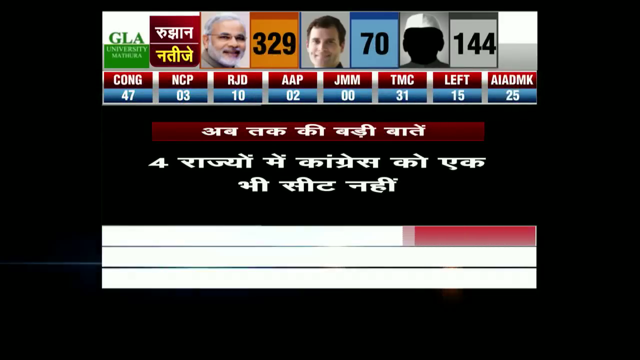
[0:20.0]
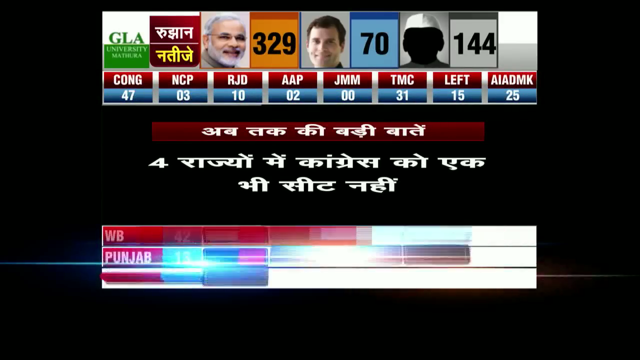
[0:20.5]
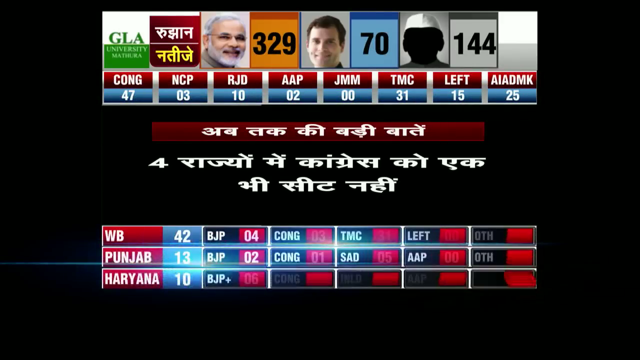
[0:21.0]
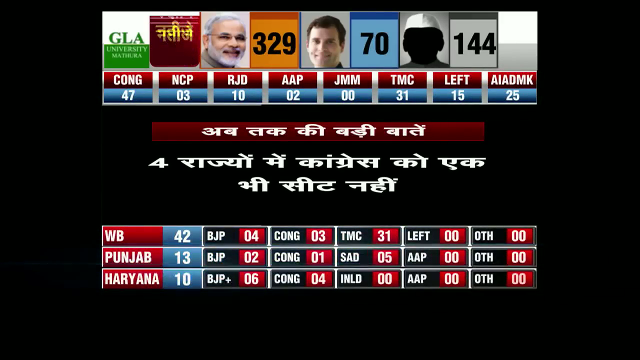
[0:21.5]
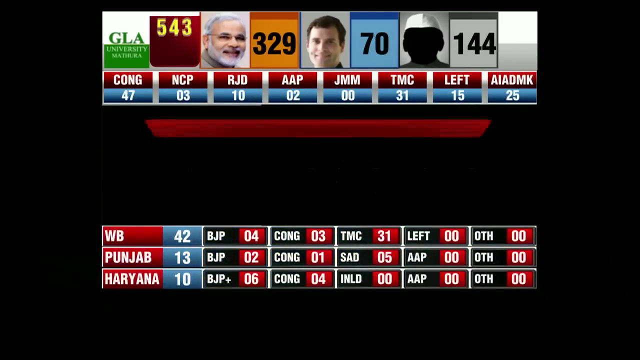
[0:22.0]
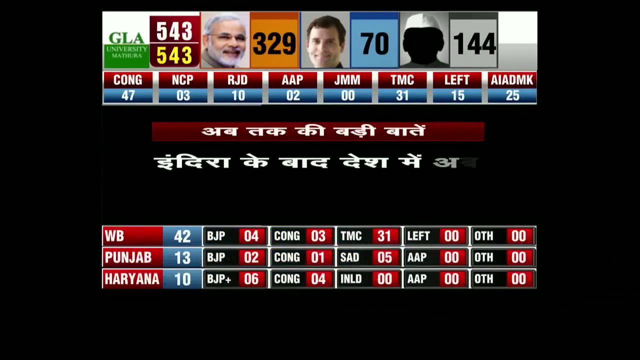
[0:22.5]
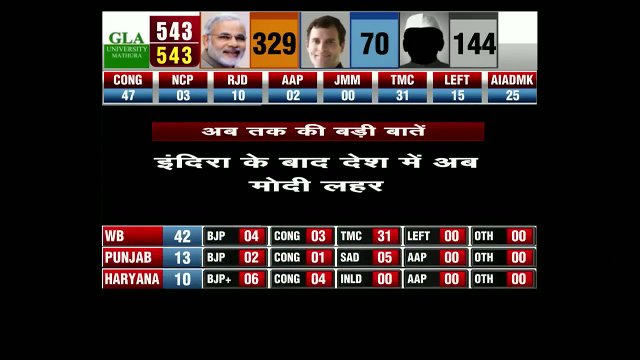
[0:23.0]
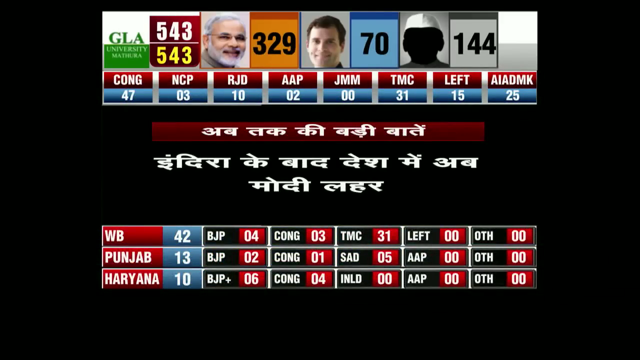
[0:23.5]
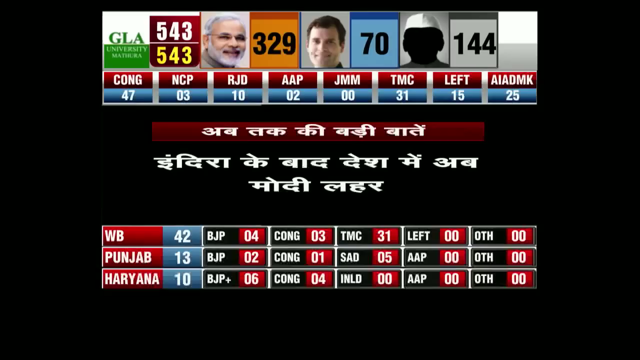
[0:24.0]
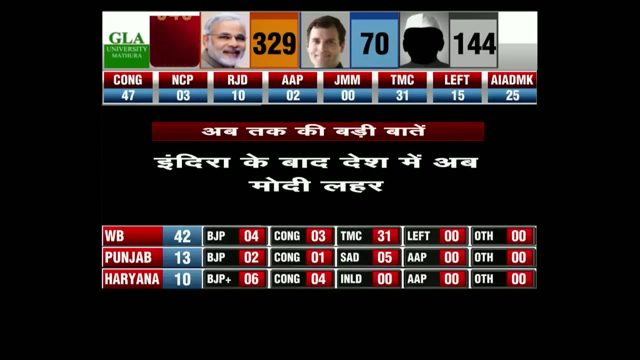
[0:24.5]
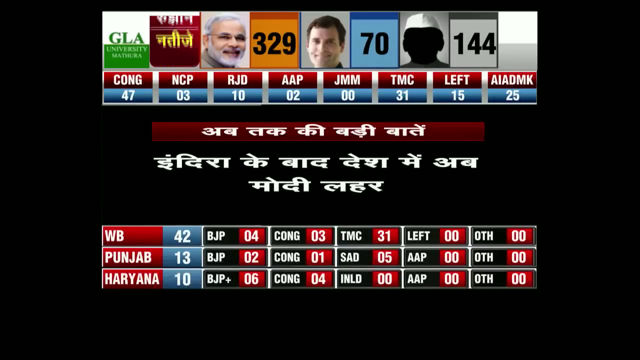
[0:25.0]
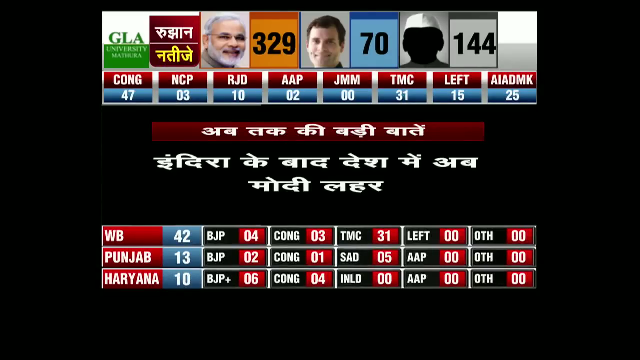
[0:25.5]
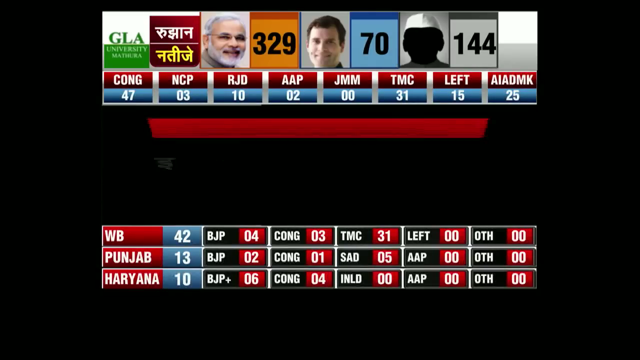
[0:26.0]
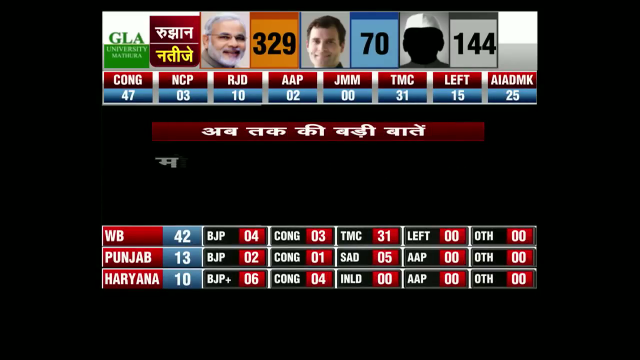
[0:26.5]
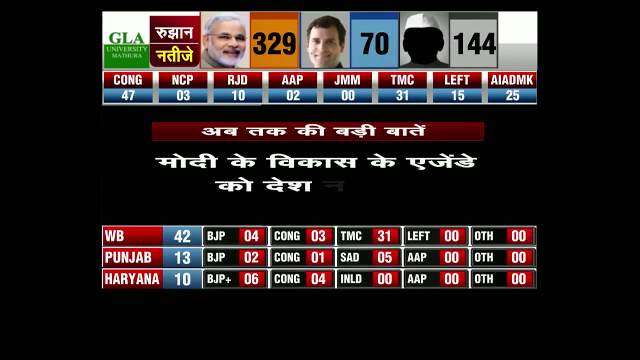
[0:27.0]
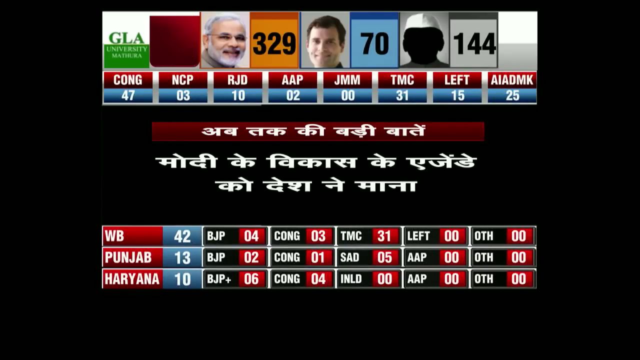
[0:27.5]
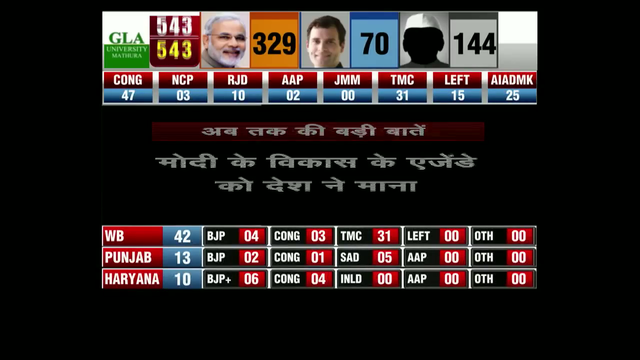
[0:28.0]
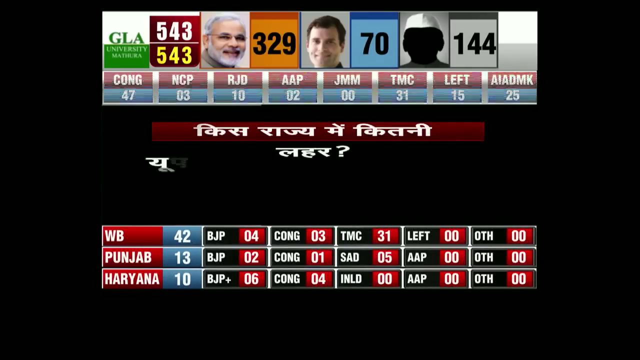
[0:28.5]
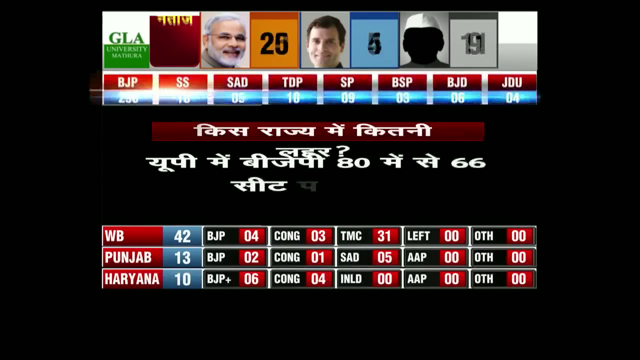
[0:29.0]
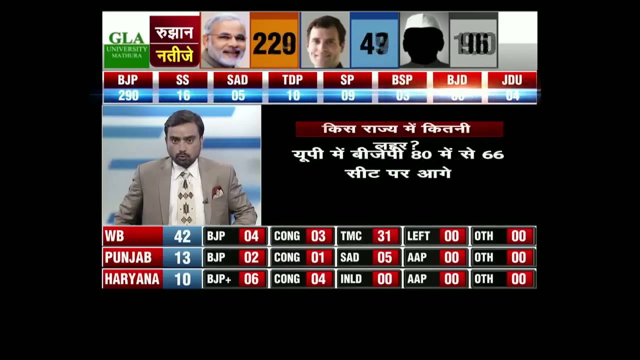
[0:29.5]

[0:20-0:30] Text in the top left corner reads "GLA University, Madra", and a score of 543 is shown. There are three candidates: one with gray hair wearing glasses has a score of 329, a second candidate in blue has a score of 70, and another candidate without an image has 144. On a board underneath, text reads "WB", "Punjab" and "Haryana", and different scores are listed on the chart, apparently showing the ongoing vote and each candidate's score. A presenter appears to be giving an explanation of what is going on.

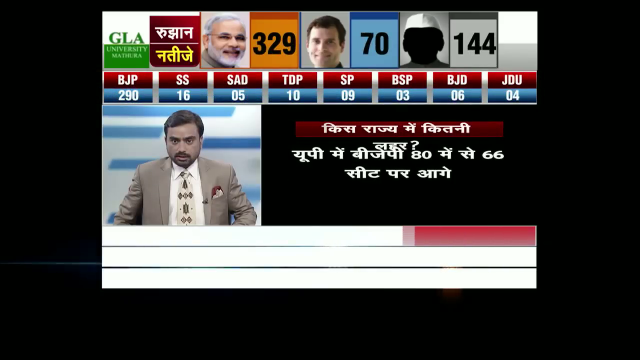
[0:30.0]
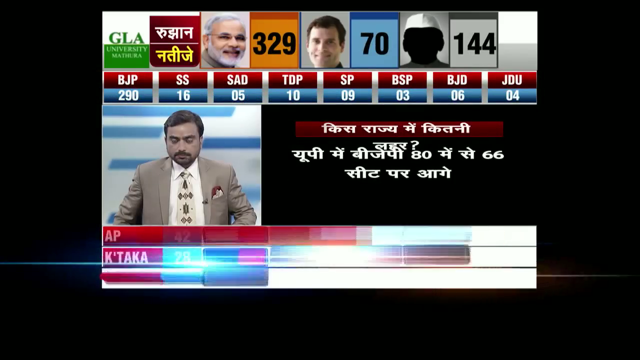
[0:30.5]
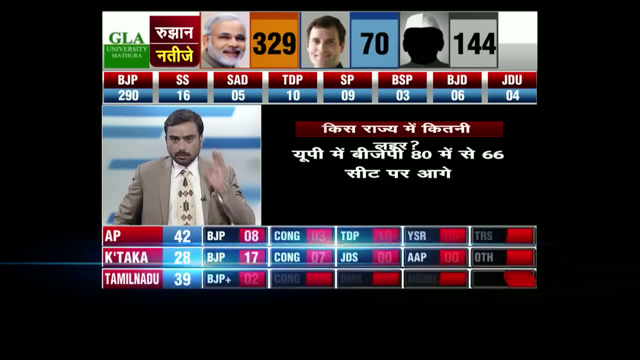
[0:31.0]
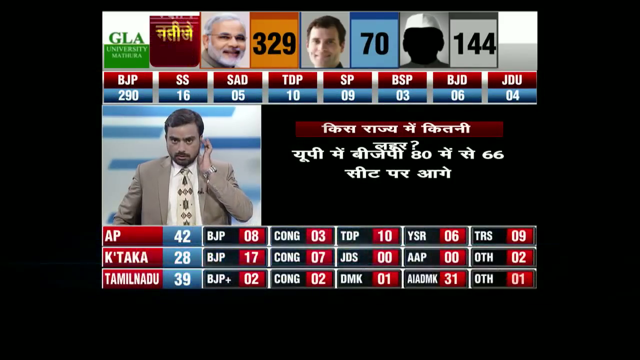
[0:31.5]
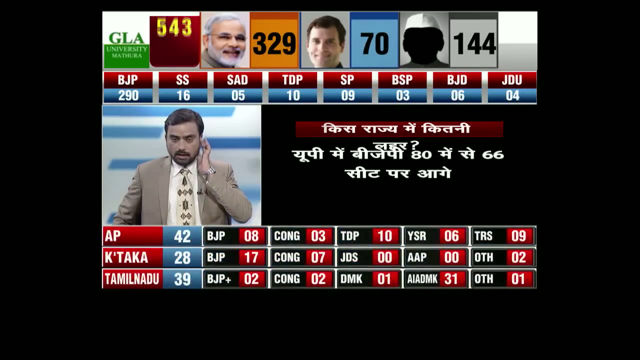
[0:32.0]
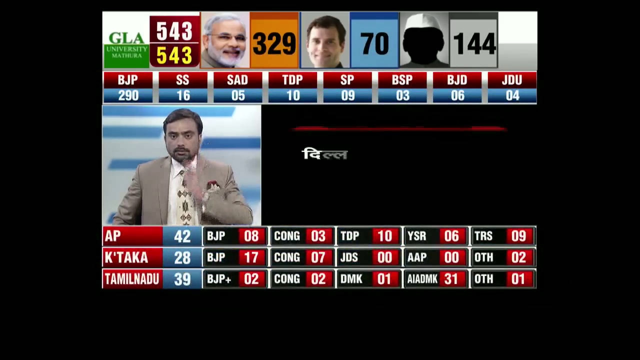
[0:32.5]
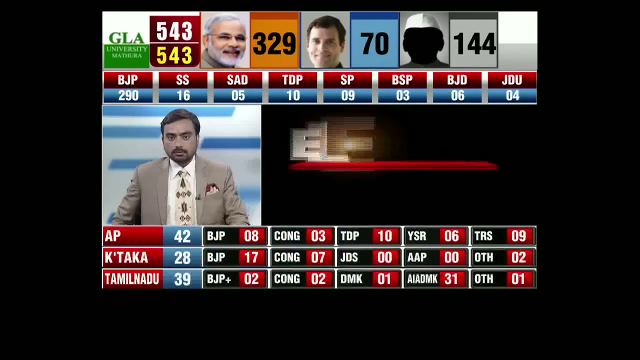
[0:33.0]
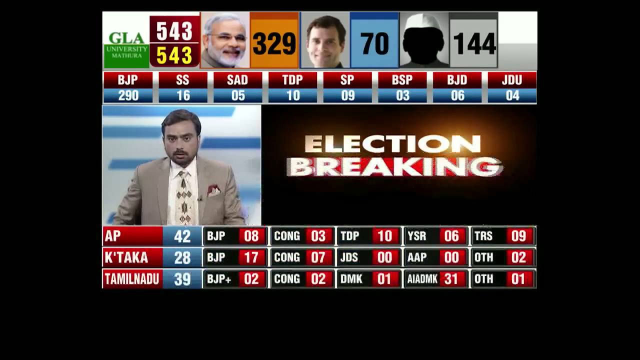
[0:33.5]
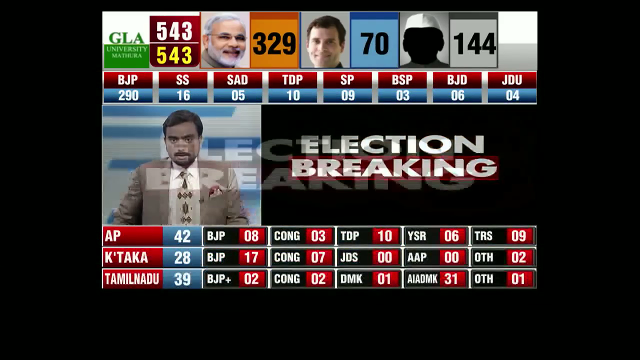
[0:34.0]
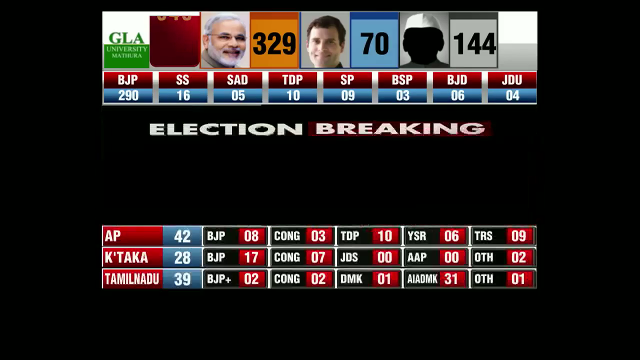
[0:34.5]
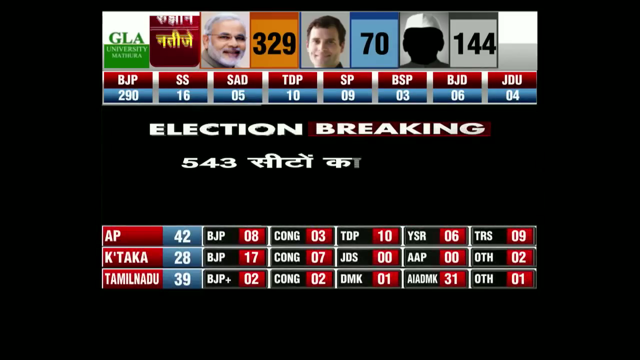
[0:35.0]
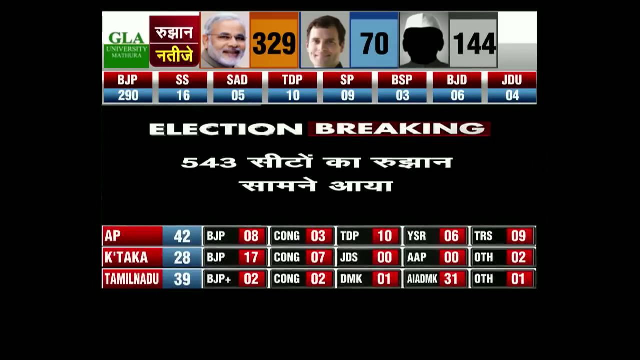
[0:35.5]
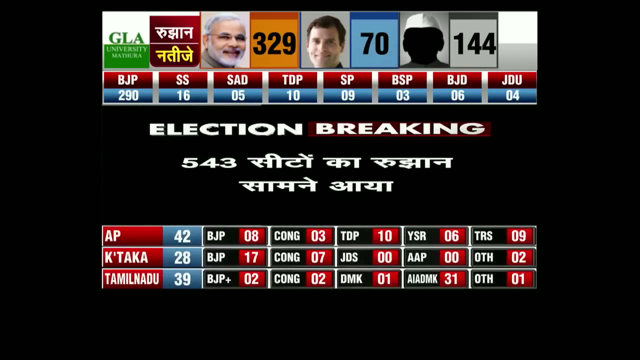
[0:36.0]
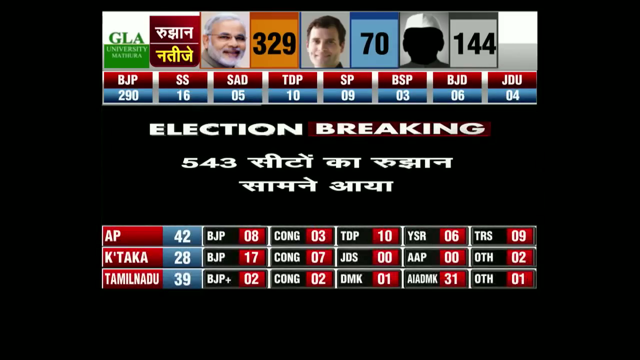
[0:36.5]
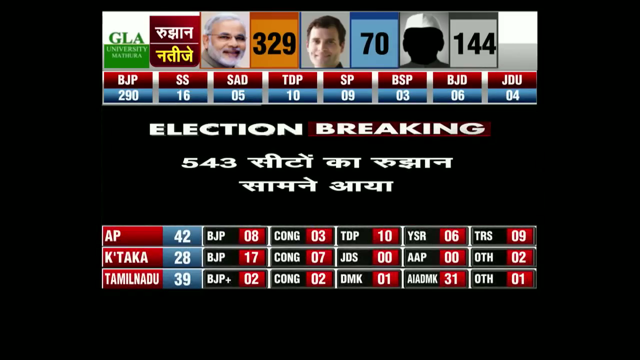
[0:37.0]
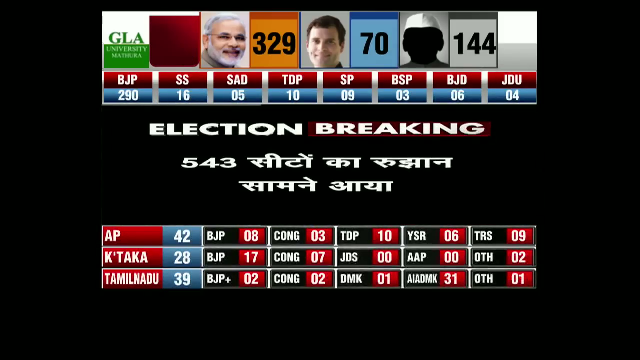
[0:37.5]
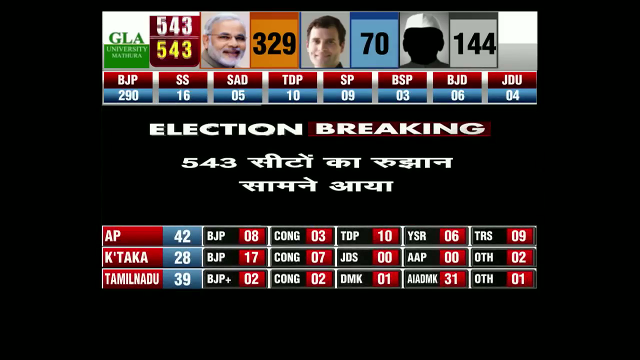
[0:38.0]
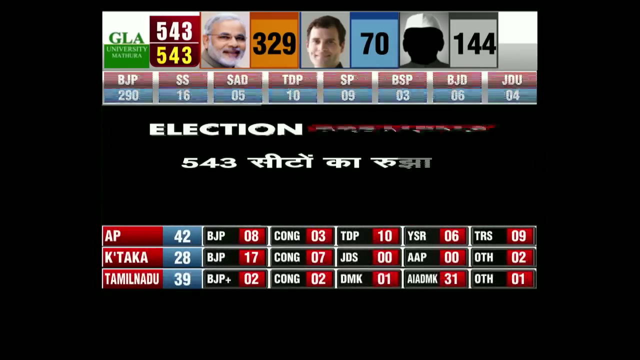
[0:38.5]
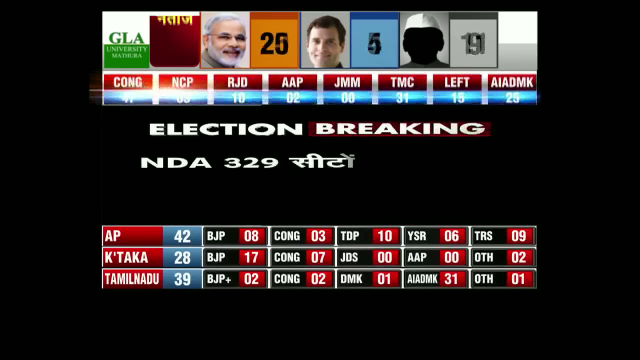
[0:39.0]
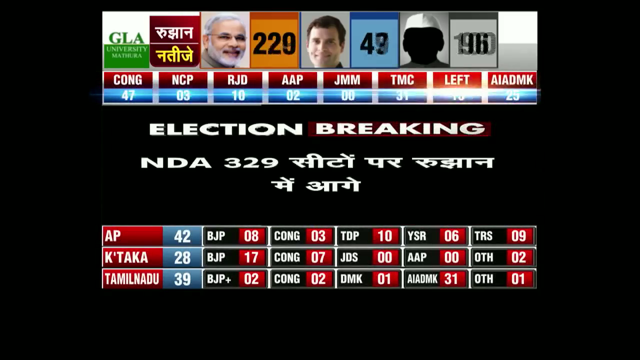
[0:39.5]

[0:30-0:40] "GLA university" appears in the top left corner, along with a write-up. A man with gray hair has a score of 322, 329, the candidate in the middle, without a beard, has a score of 70, and an image with a dark spot and a white cap has a score of 144. A presenter dressed in a brown suit and tie is looking on, apparently explaining what is happening with the election. A write-up reads "election breaking" as the report is announced; this appears to be an election taking place in India.